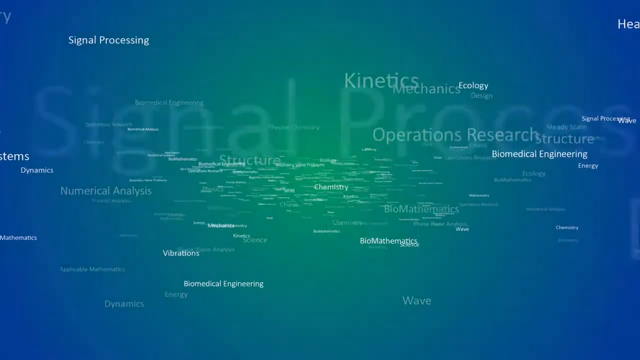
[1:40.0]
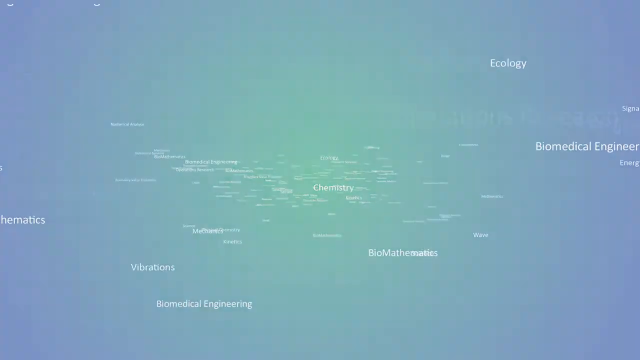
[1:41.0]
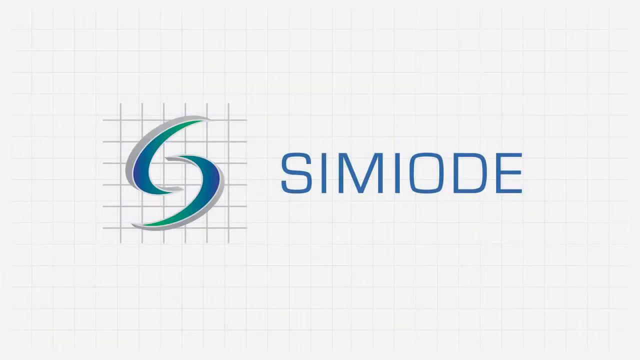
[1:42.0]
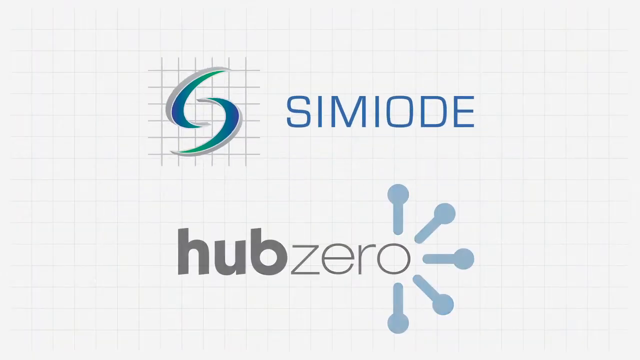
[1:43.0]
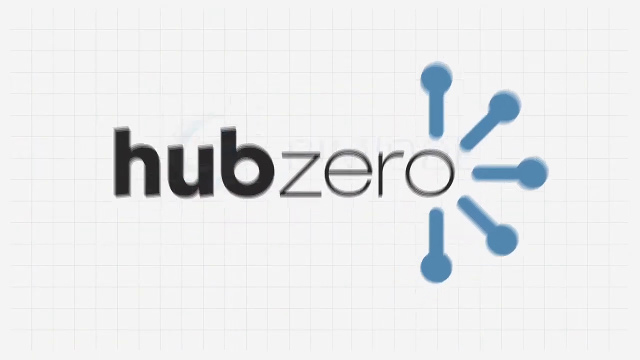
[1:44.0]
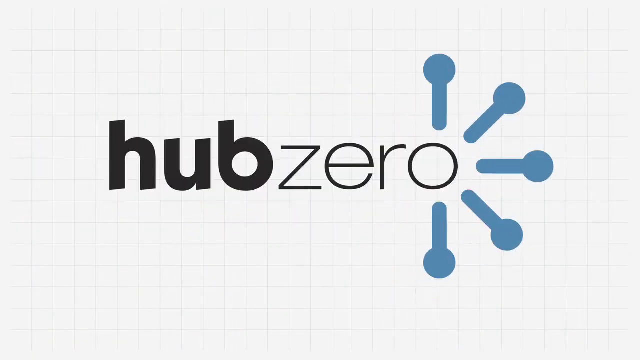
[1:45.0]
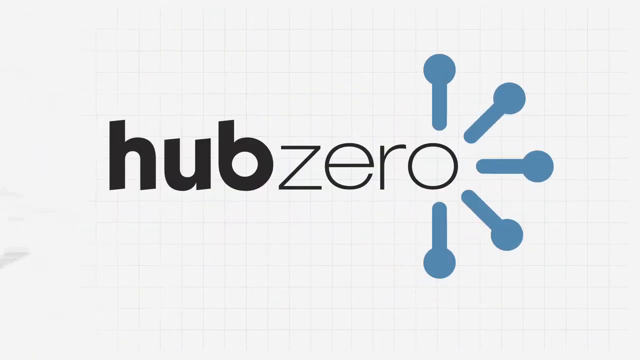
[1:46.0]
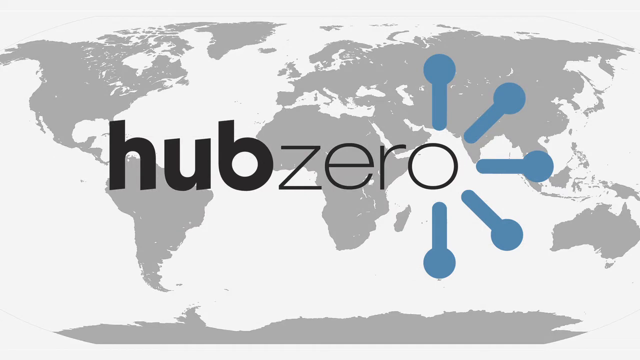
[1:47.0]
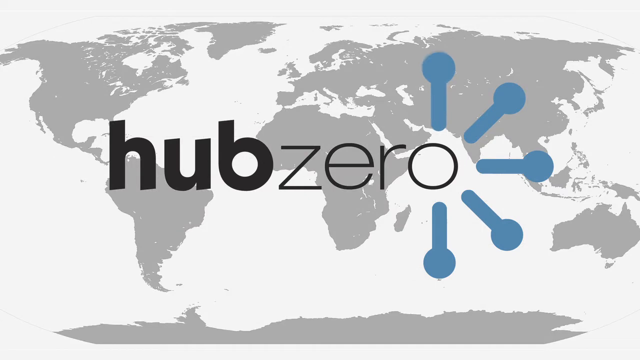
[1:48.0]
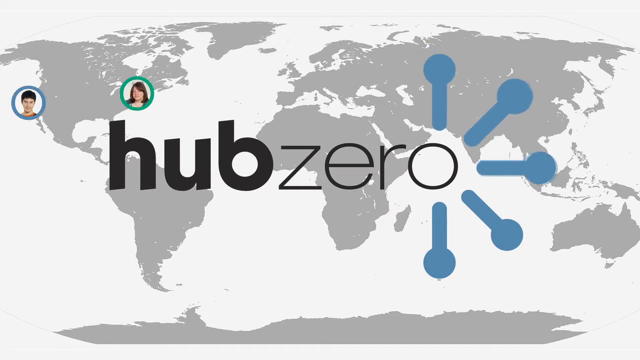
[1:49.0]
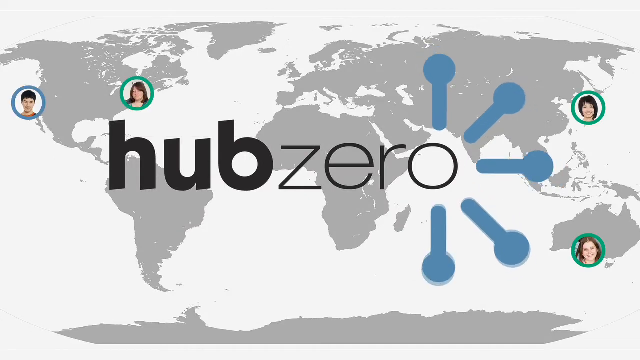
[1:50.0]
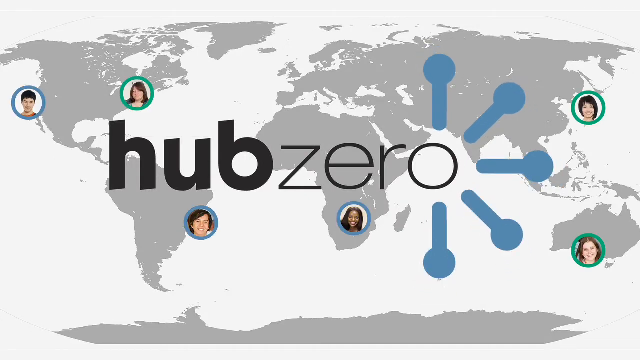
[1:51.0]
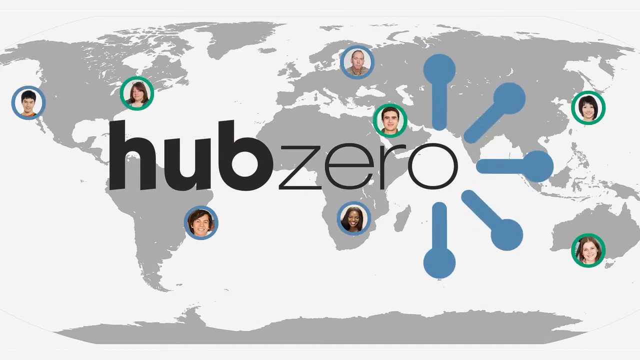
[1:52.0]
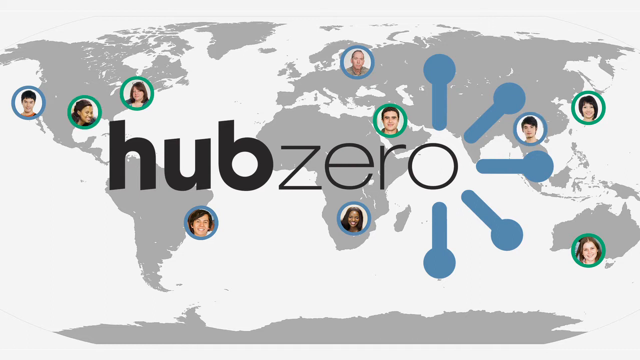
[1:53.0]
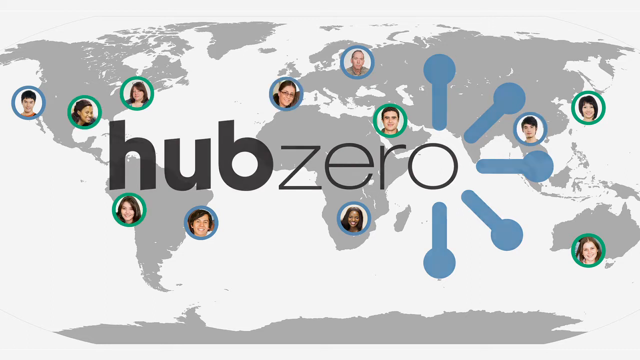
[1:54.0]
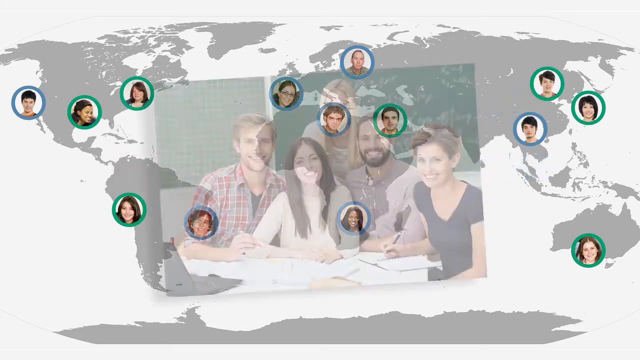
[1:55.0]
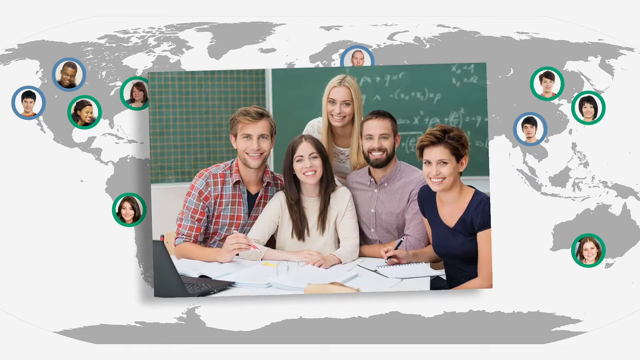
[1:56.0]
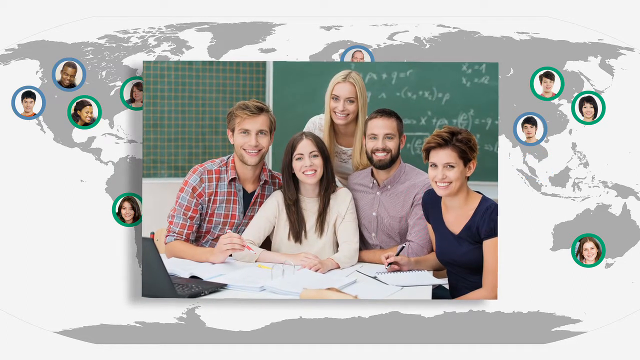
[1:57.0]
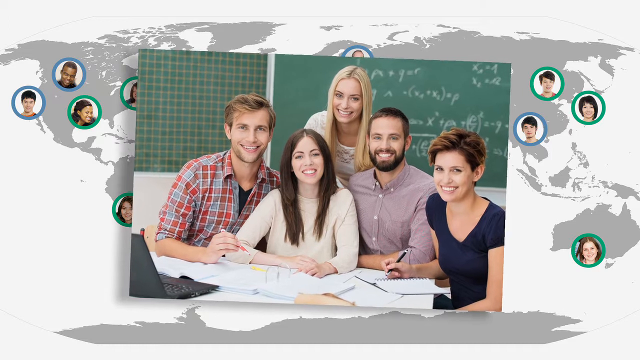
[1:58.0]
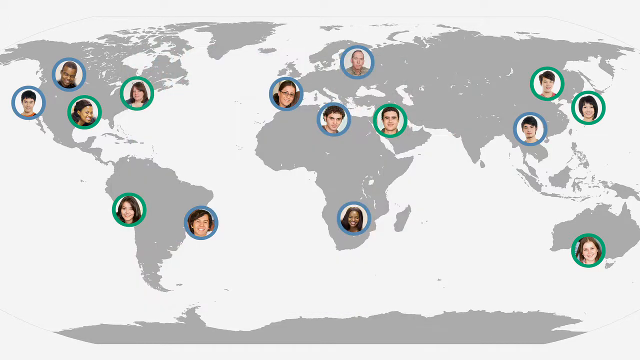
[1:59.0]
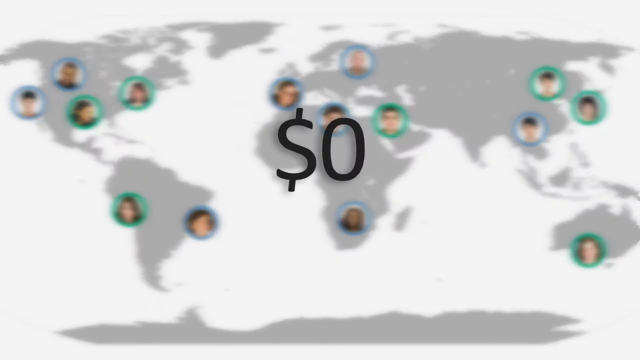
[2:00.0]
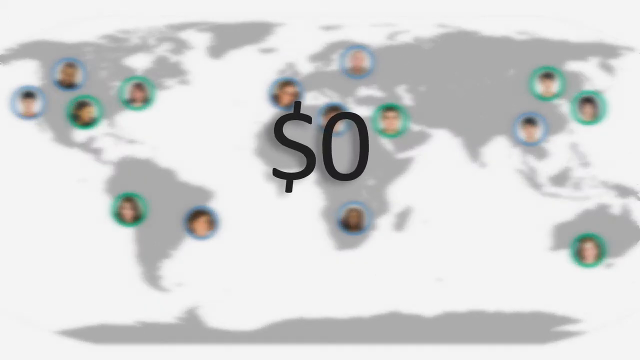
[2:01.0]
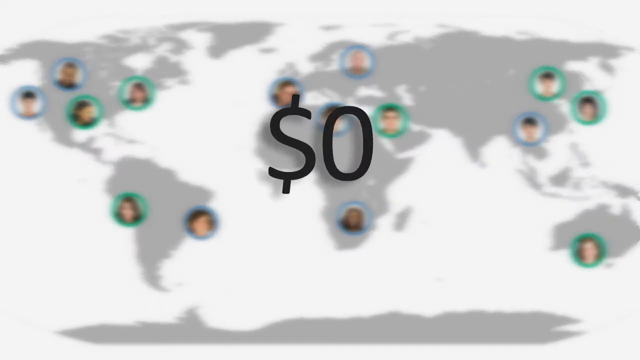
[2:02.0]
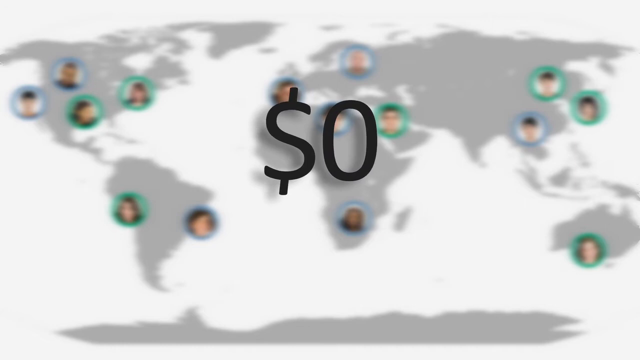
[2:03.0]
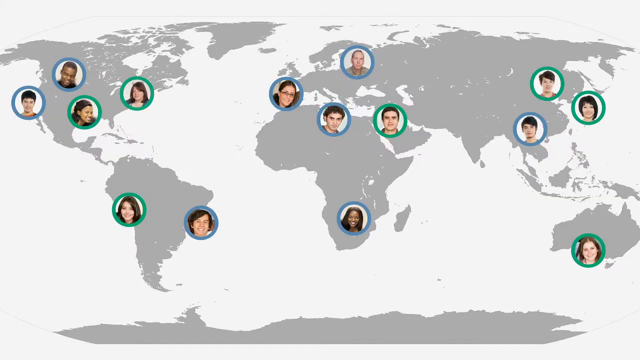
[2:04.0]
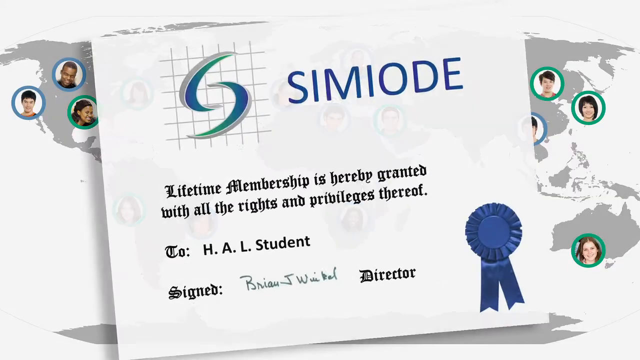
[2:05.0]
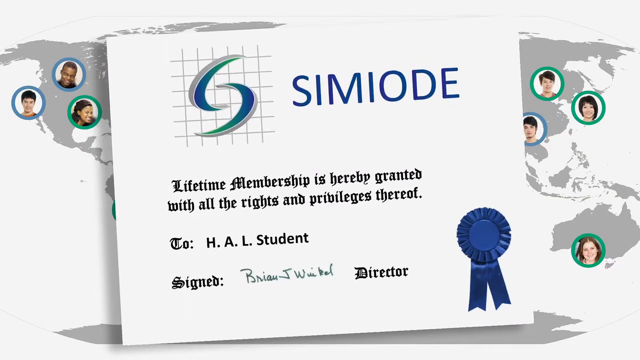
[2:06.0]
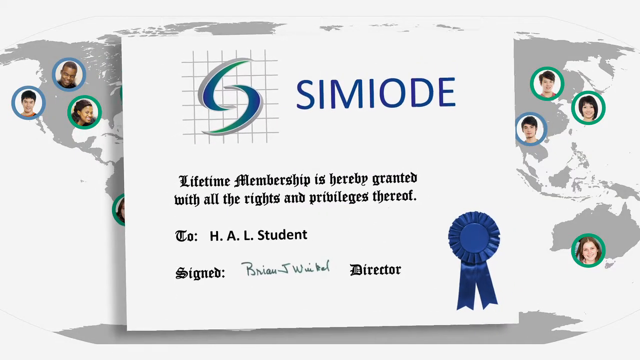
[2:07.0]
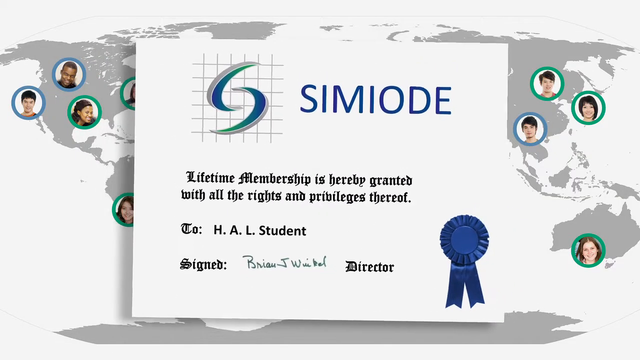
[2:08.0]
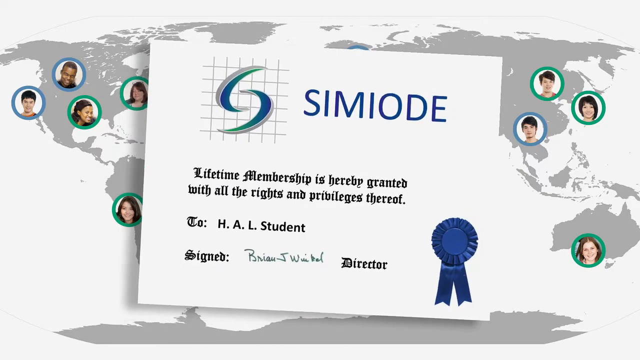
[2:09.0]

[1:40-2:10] The blue screen with green toward the center appears, the green seeming fainter this time. Words approach from the center of the screen: "mathematics" on the left, just below center; "signal processing" at the top left; "biomedical engineering" on the right, just above center; "energy" below that; and "chemistry" in smaller text more or less dead center. The graphic changes back to the SIMIODE image, which is replaced by the text "hub" in very dark, thick black font followed by a much thinner "zero". Then blue symbols that look like thermometers or thermostats appear, pointing in different directions from the O at the end of "zero": the one below has a circle and a vertical shape with a rounded end, the one above the O is the same but with the rounded vertical pointing down, and there is an arc with three others on the end of the O. A grey map of the world on a white background comes in from the left side of the screen and stops with South America on the left, North America above it toward the top left, Europe in the middle just above center, and Africa below that, pointing to just below center. Two images appear: a young man in a blue circle with a white background and a young woman in a green circle with a white background. The thermometers or thermostats start throbbing, and more photos in blue or green circles appear at seemingly random places over the map.